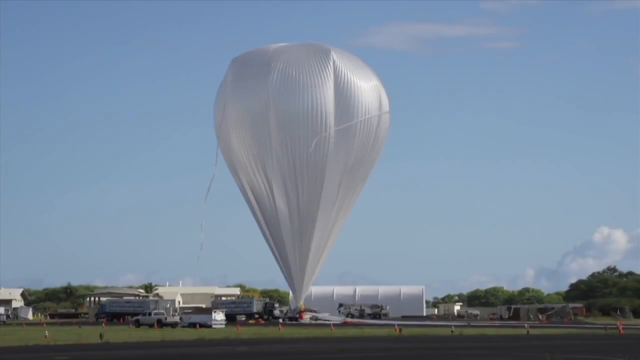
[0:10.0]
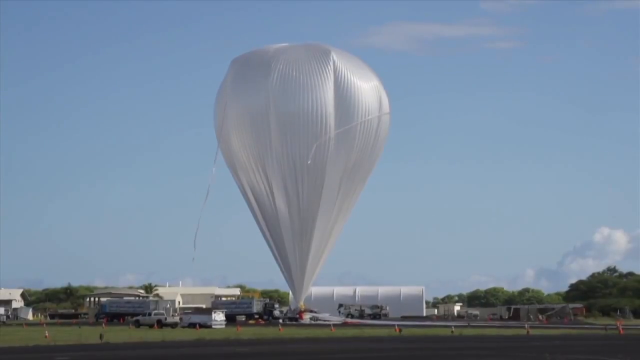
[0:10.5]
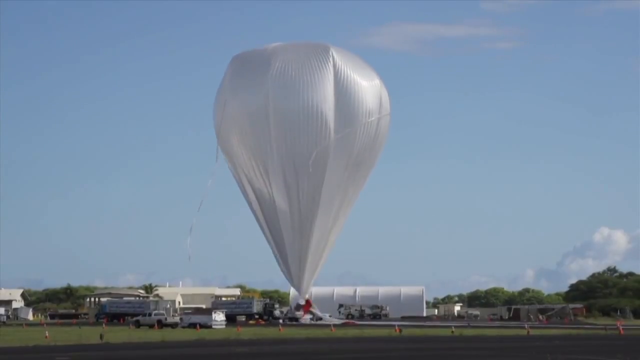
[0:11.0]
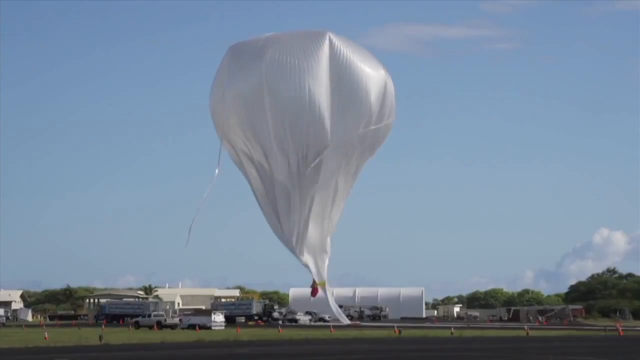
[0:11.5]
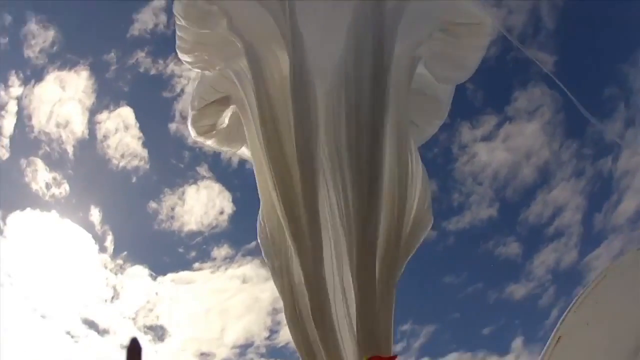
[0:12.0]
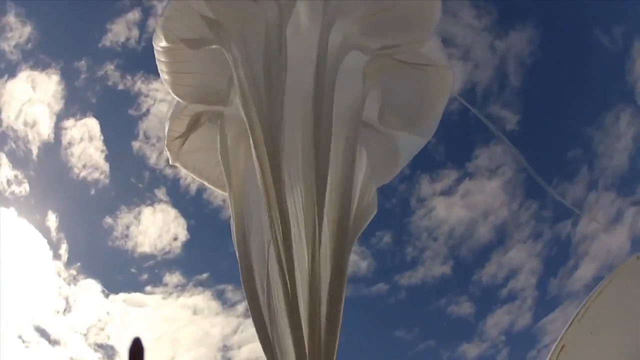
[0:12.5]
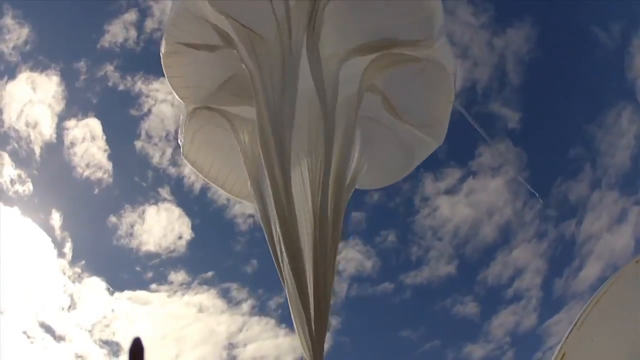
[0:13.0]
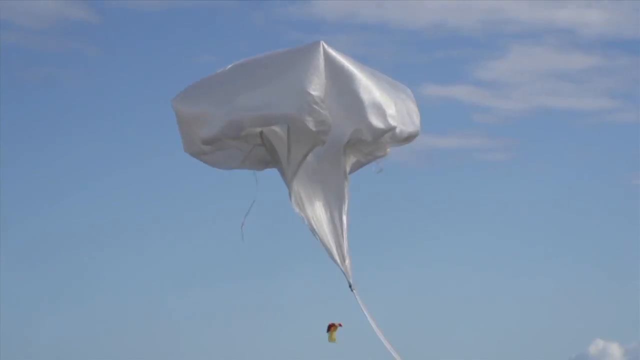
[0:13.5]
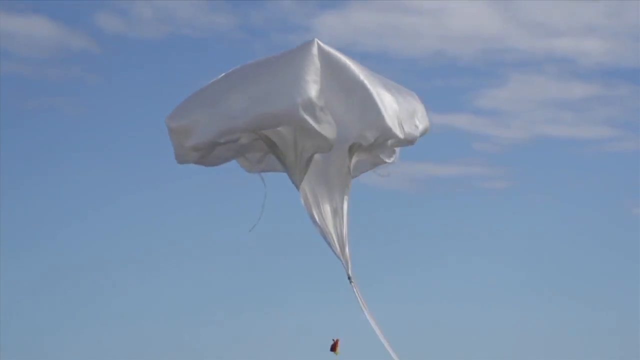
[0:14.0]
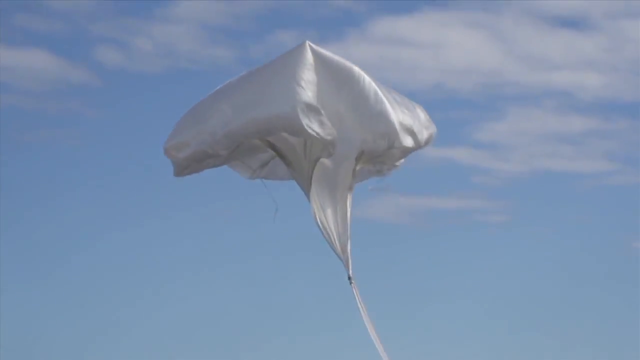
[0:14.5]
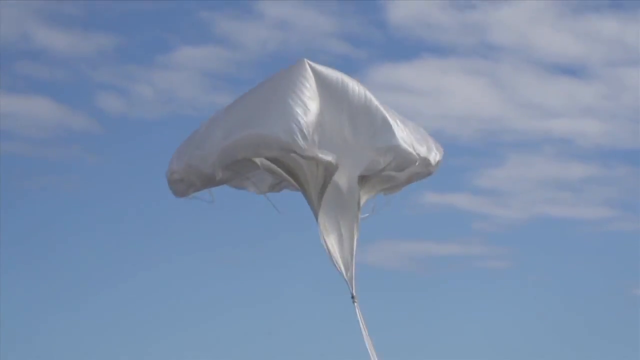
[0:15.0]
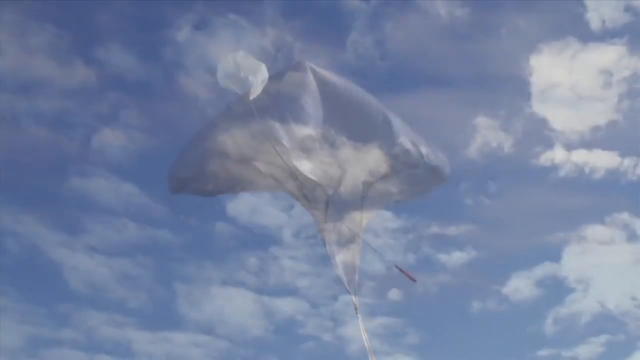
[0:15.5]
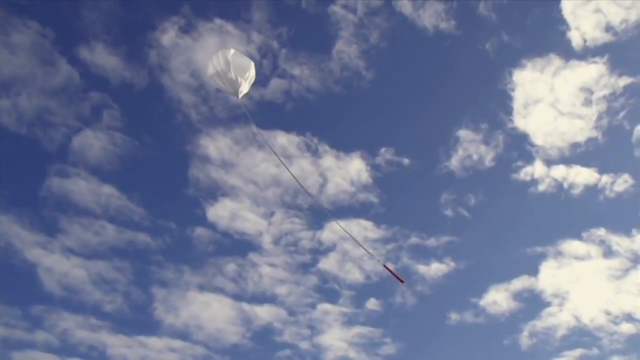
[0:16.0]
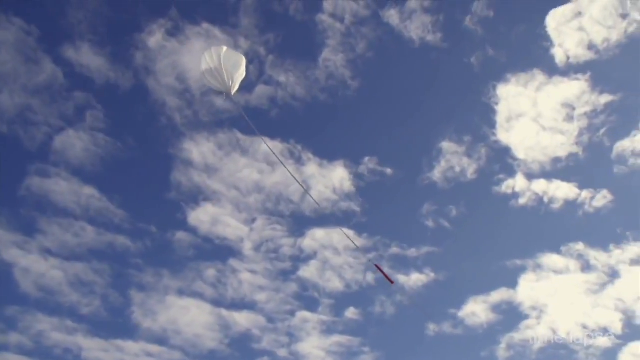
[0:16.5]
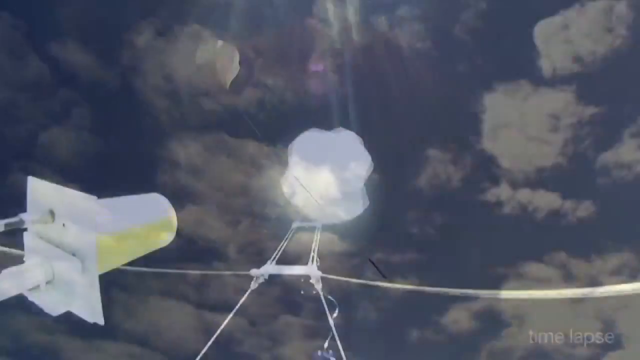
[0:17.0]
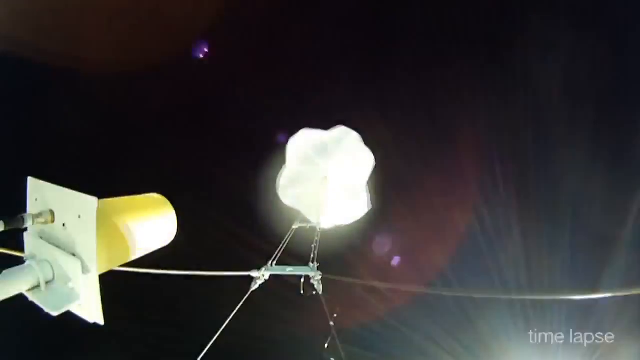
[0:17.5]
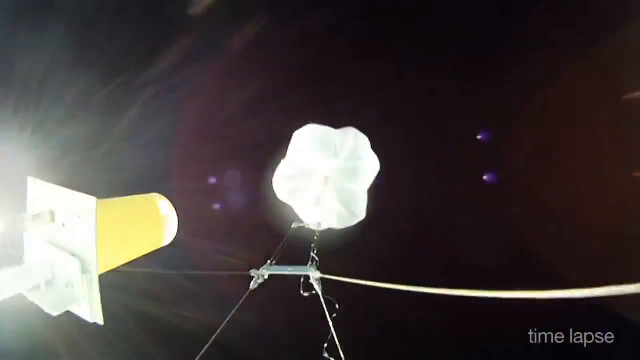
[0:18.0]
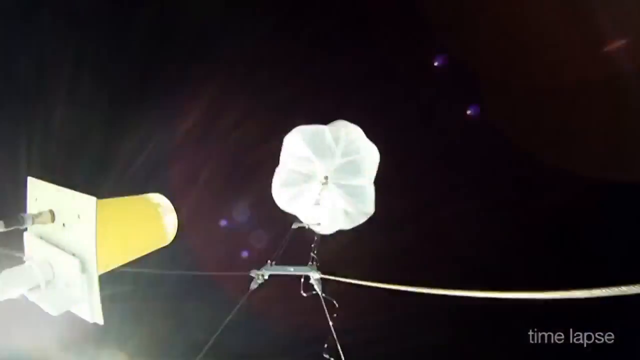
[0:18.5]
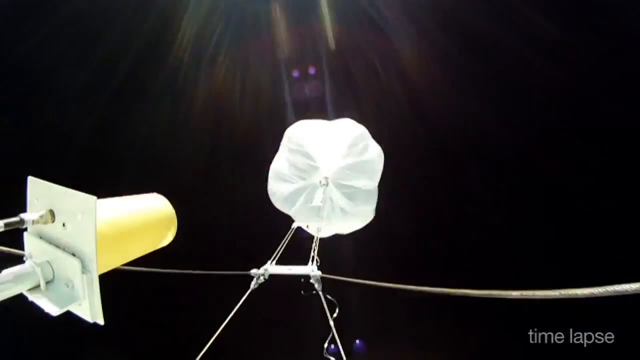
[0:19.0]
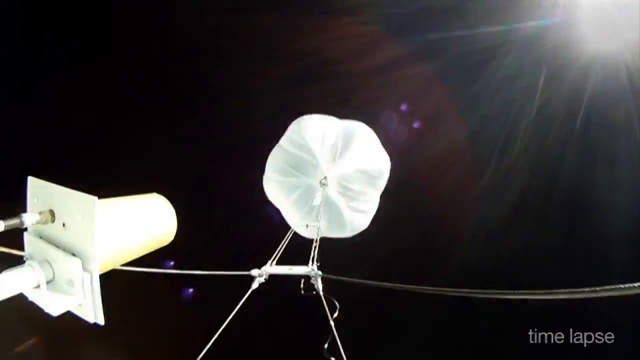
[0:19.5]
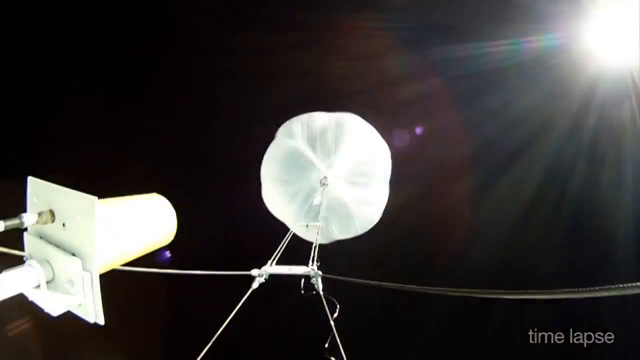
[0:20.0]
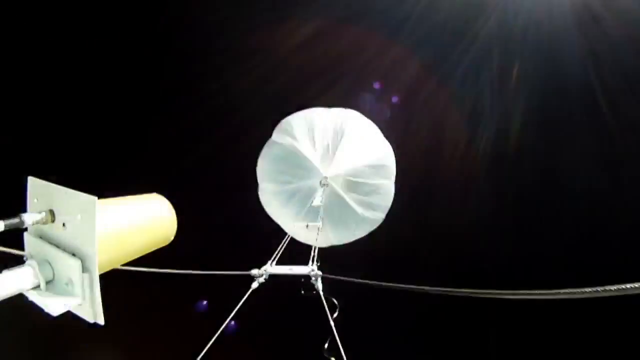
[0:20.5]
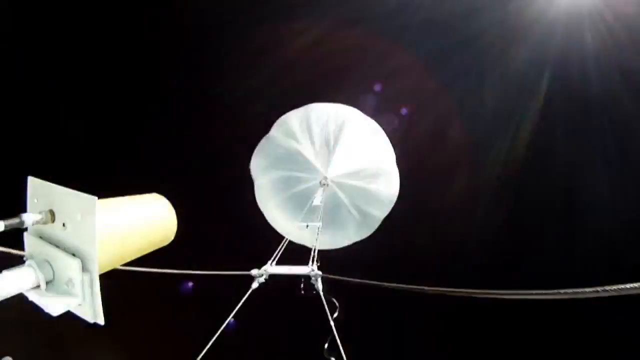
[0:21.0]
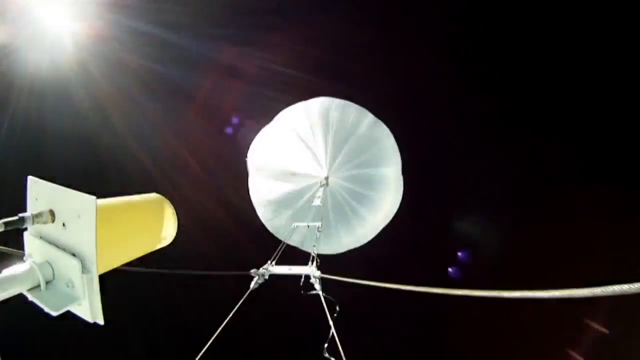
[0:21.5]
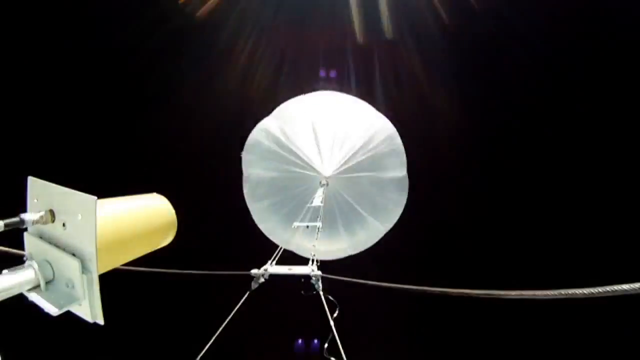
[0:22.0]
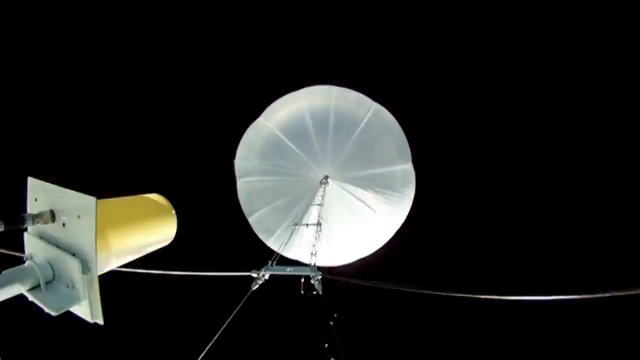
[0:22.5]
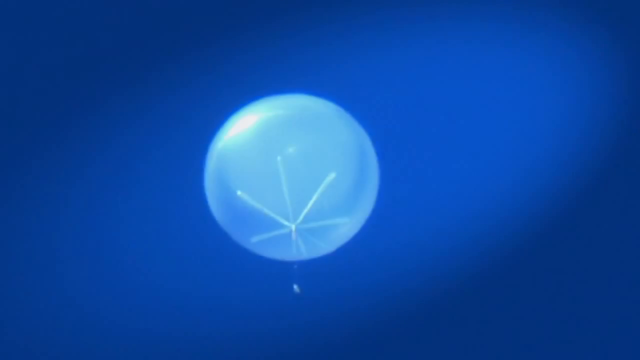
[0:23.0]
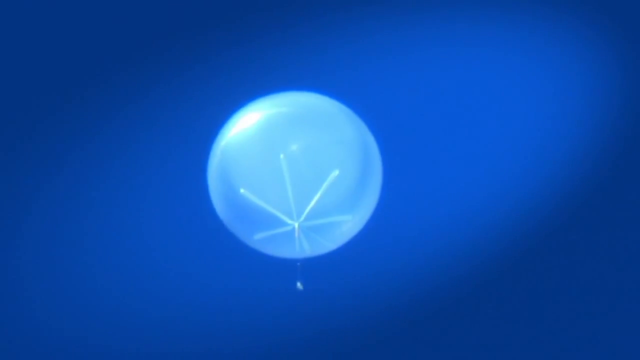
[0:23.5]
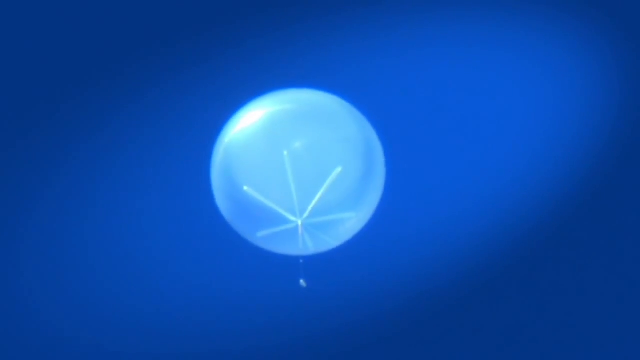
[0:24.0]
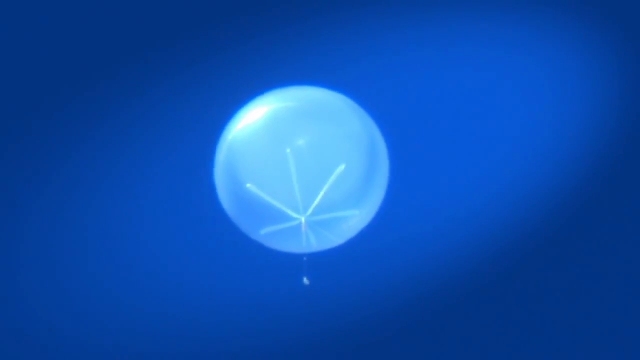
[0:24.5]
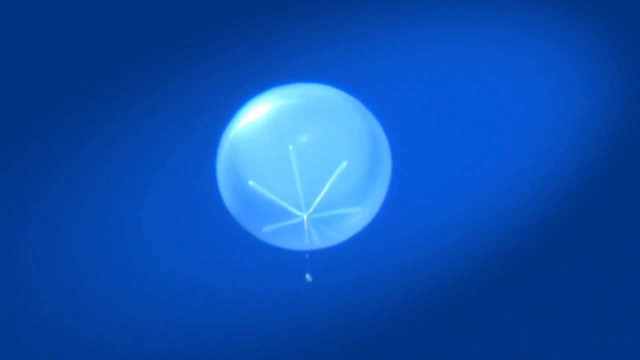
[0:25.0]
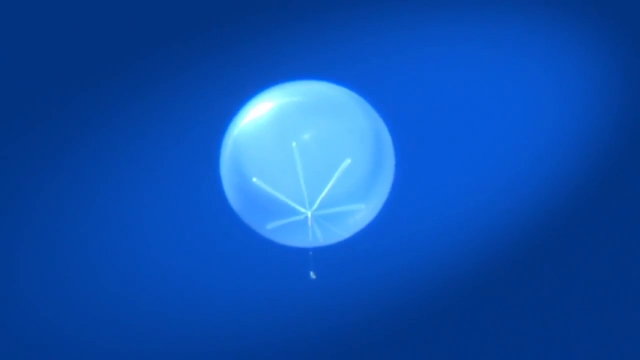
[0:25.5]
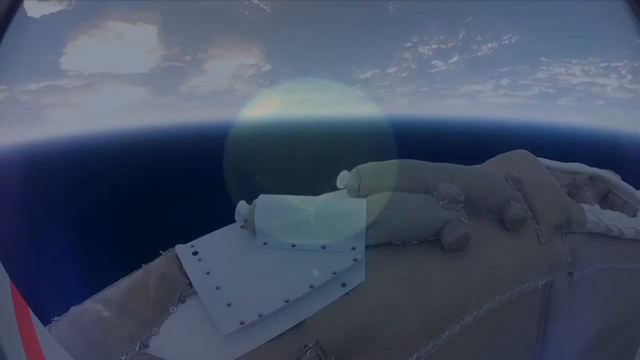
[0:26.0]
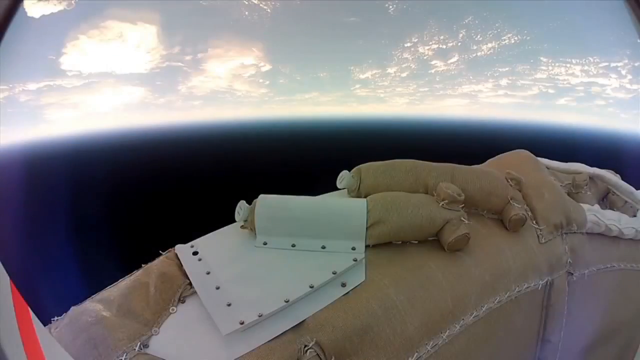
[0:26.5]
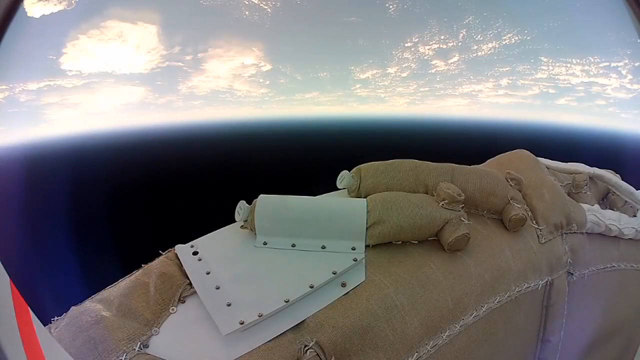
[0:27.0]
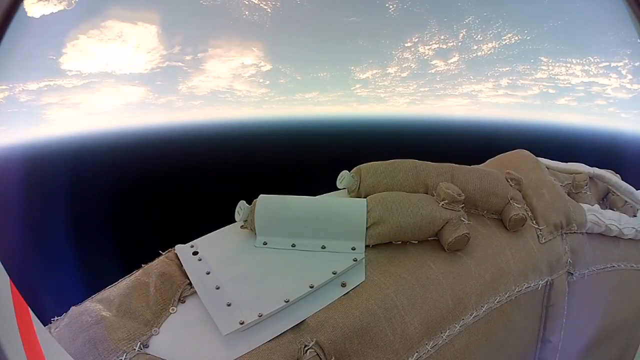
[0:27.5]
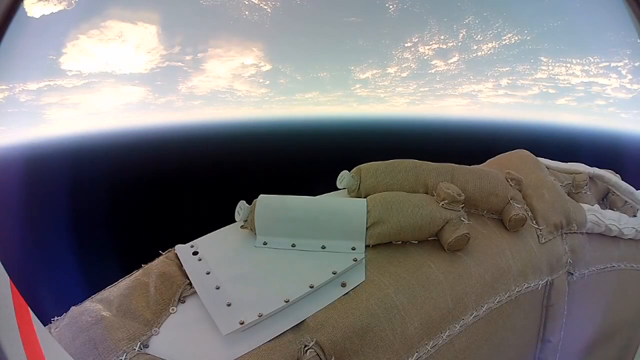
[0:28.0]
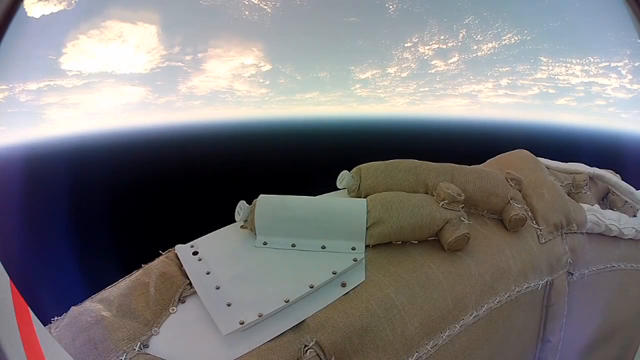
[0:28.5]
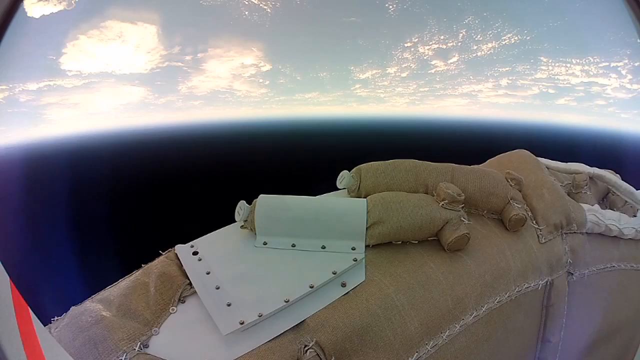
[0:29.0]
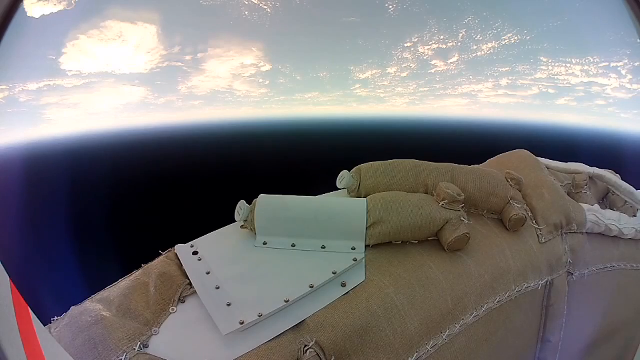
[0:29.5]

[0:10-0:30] A different angle shows the balloon, like a white sheet being pulled toward the sky by air while still connected to the ground. It is released and begins to float up, changing shape and kind of collapsing, with air still inside it, then floats up into the sky a little. From another angle, with the camera apparently below the balloon, the balloon rises into the atmosphere against a black sky. It spins very fast, the sun circling as it spins, and the balloon grows larger and more spherical. A view from the ground shows the balloon floating up into the atmosphere, now spherical and looking kind of like a bubble. Then another image from outside the atmosphere shows the blackness of space at the bottom, the Earth, sky and clouds near the top, and metal parts of the device at the bottom.